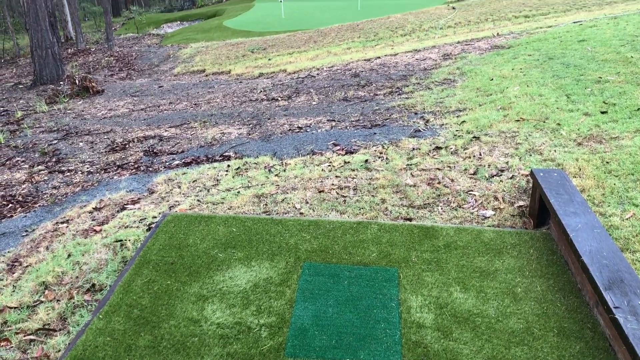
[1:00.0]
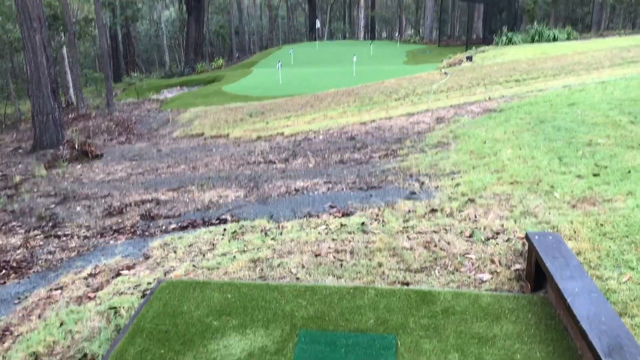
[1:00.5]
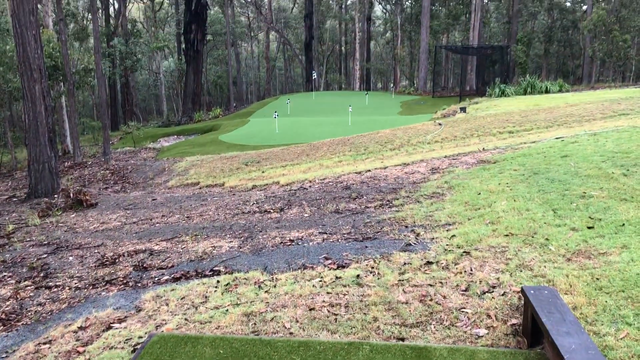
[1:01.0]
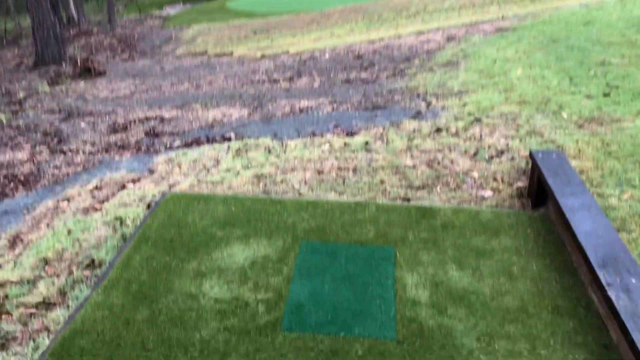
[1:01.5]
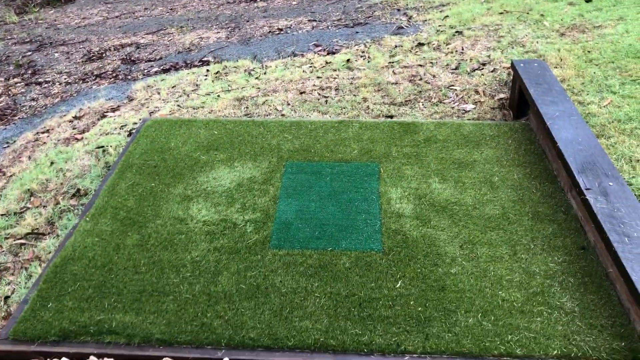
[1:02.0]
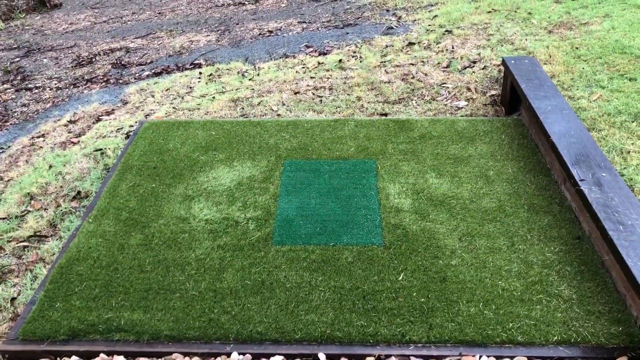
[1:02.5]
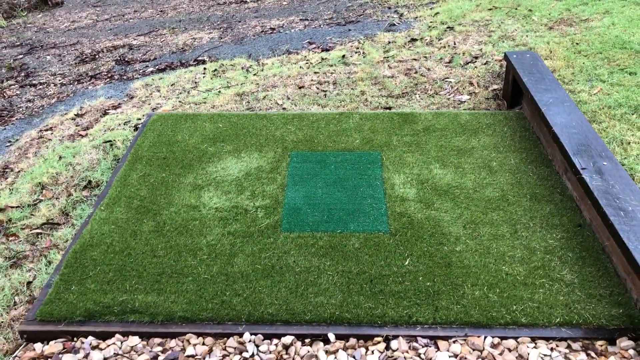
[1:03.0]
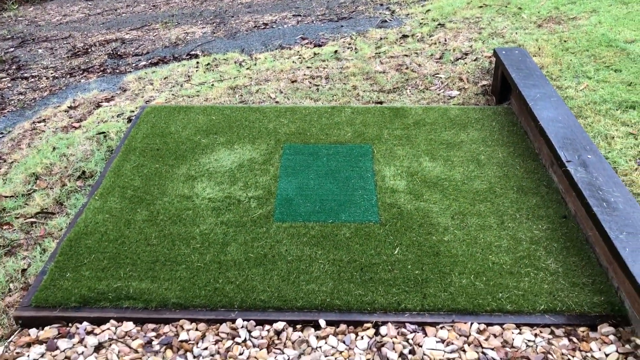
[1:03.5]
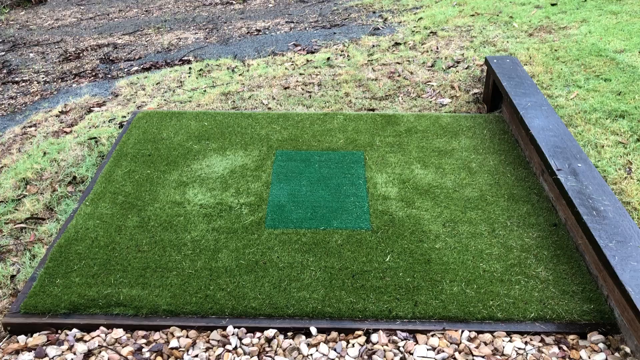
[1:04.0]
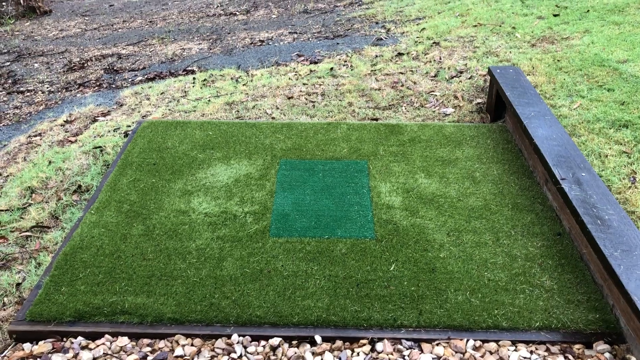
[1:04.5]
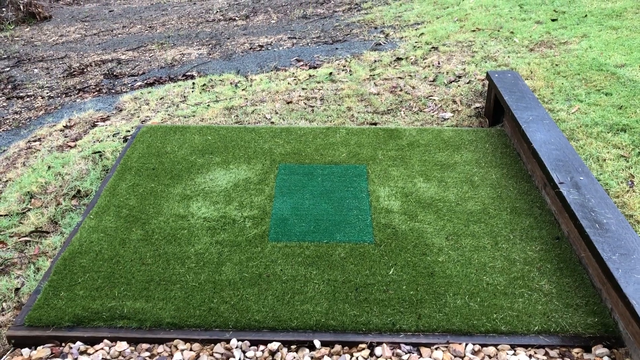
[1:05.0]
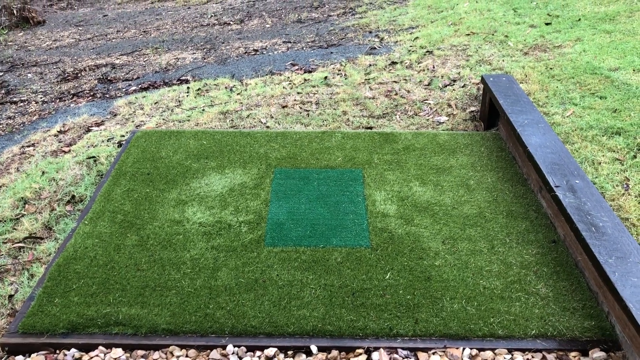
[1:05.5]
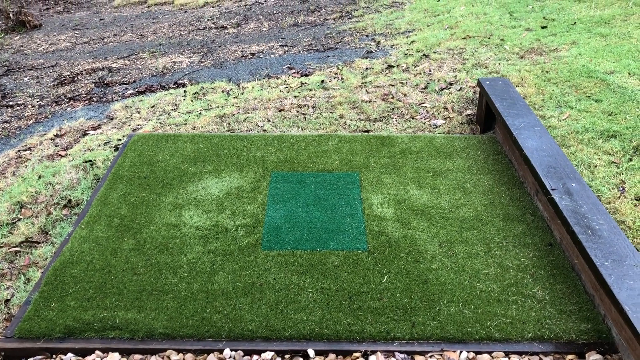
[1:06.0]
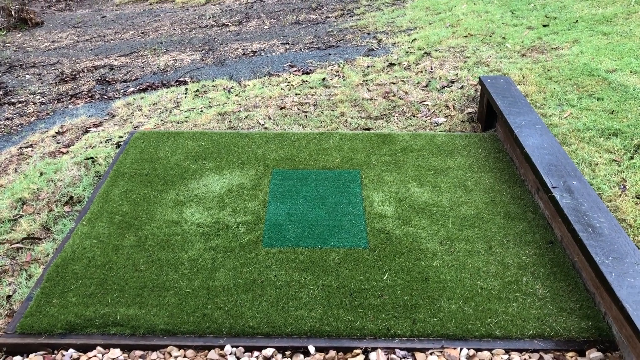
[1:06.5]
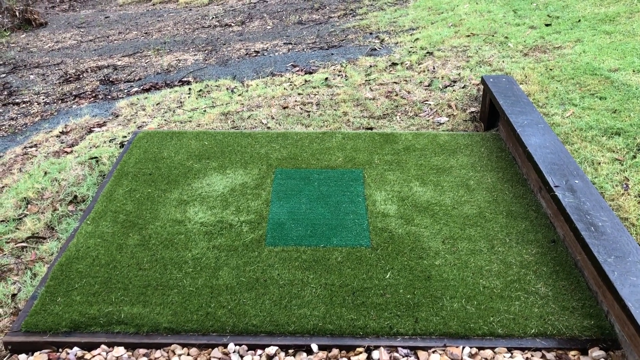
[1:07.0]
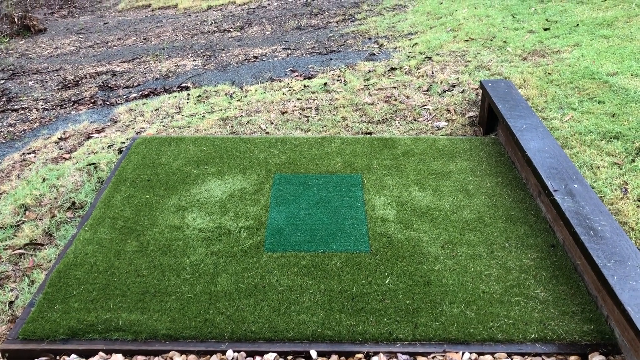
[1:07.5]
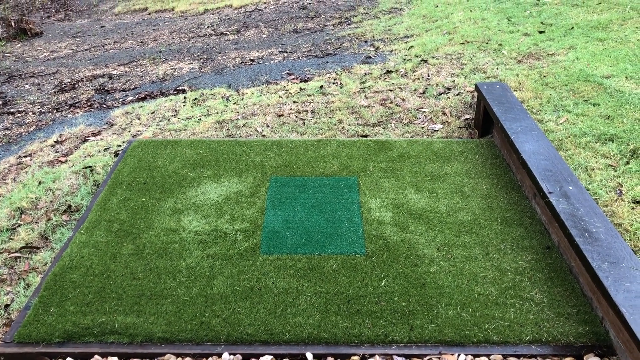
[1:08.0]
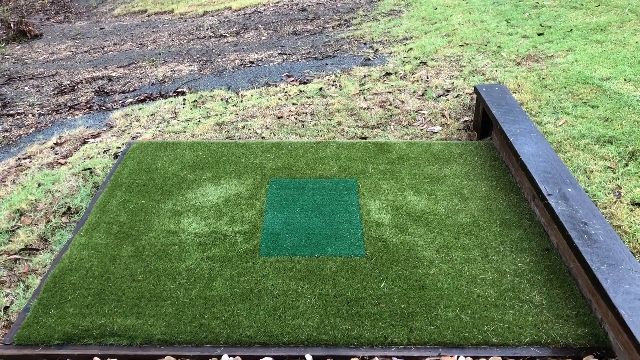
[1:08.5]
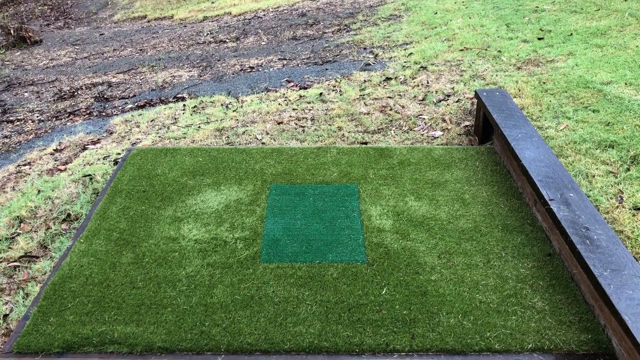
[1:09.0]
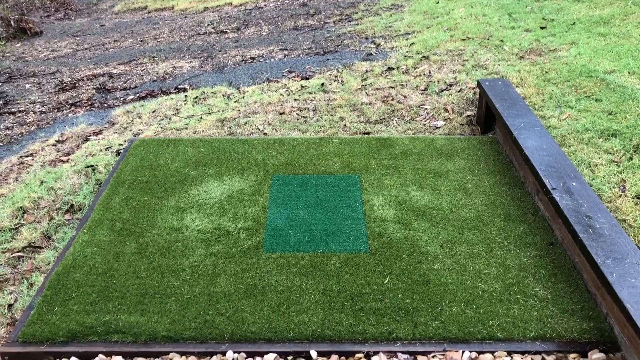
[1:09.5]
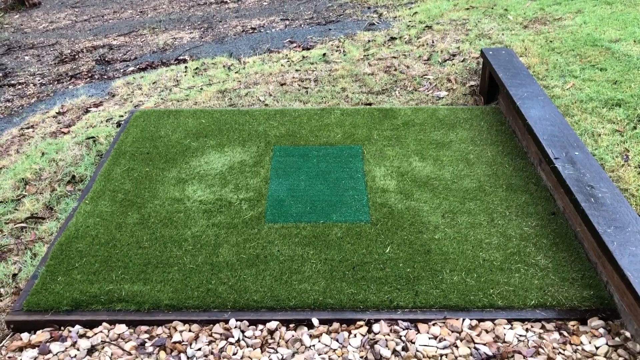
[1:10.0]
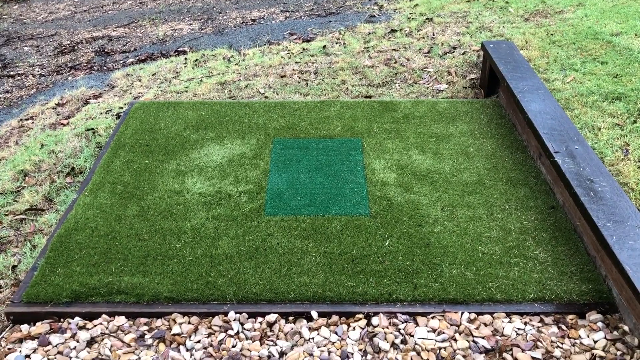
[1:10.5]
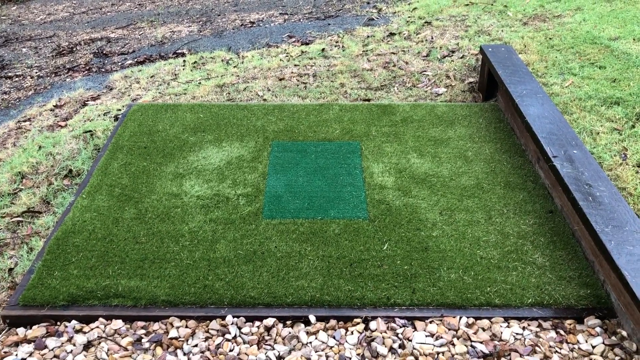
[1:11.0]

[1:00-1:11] An outdoor golf course is visible along with an astroturfed structure to tee off on, apparently about four or five by four. In its middle is a square of less coarse astroturf. There is a wooden beam to the right and rocks behind it. In the distance is a green with six flags on it.